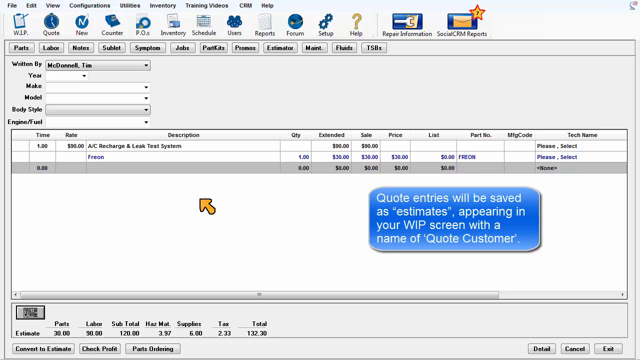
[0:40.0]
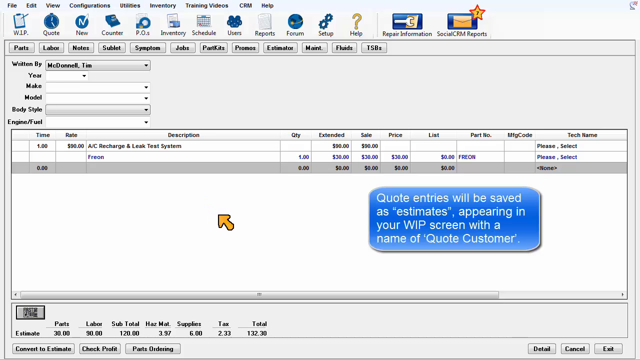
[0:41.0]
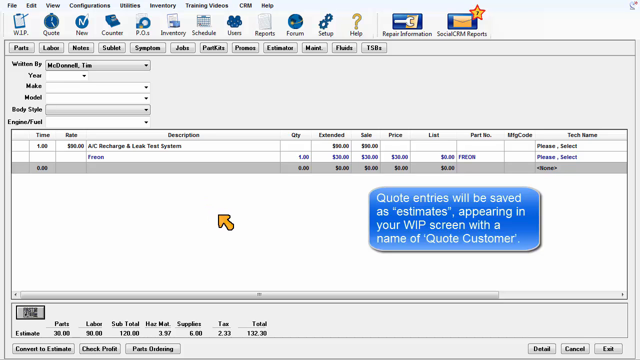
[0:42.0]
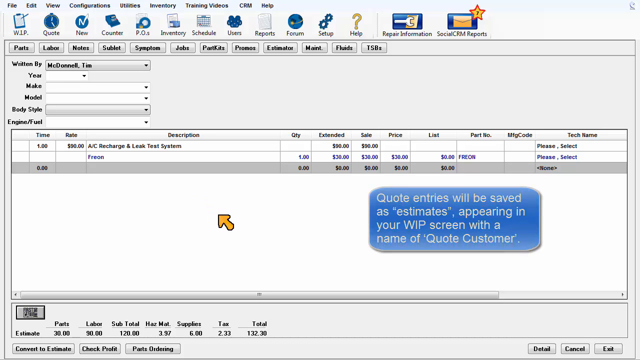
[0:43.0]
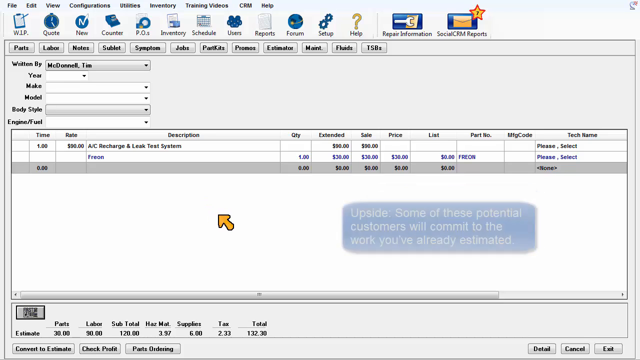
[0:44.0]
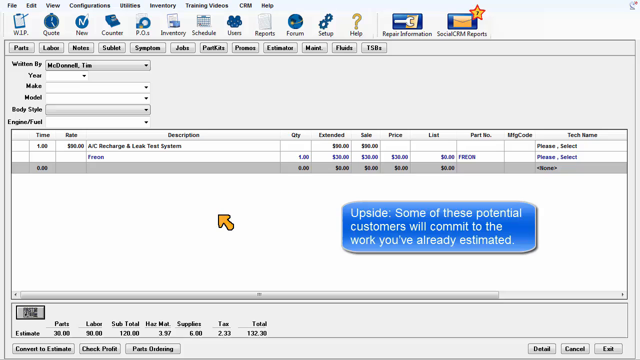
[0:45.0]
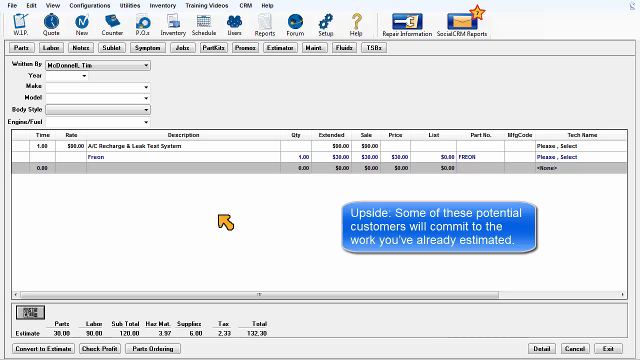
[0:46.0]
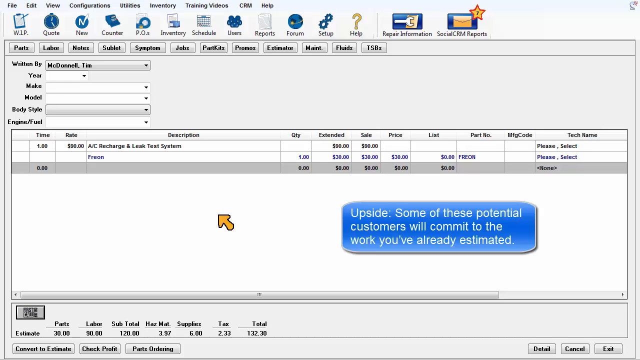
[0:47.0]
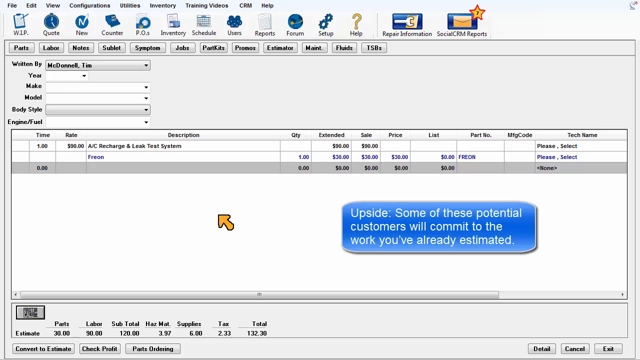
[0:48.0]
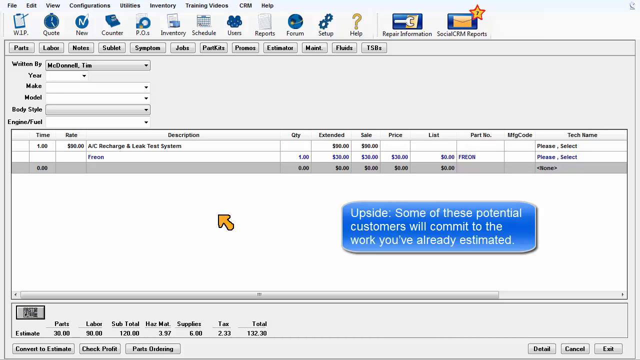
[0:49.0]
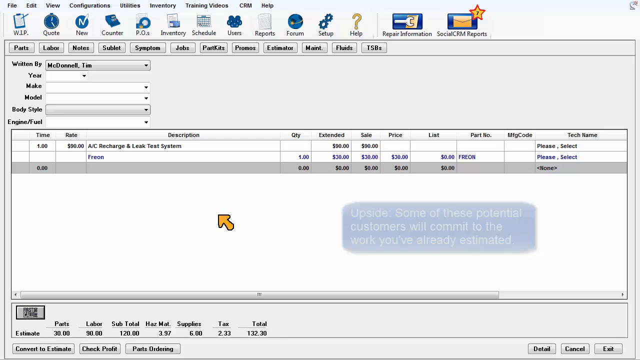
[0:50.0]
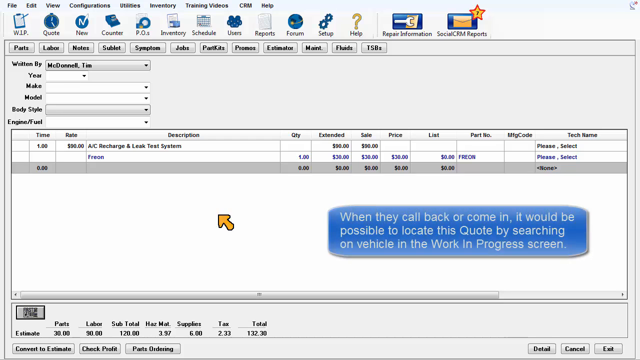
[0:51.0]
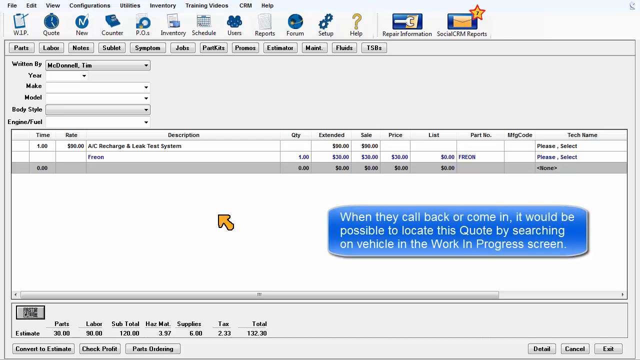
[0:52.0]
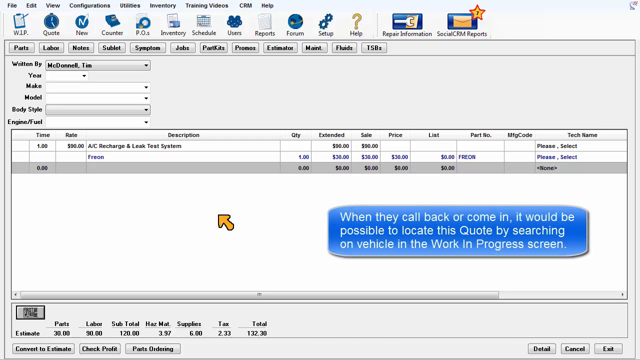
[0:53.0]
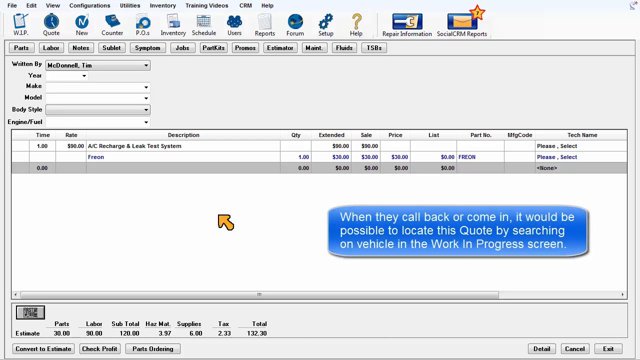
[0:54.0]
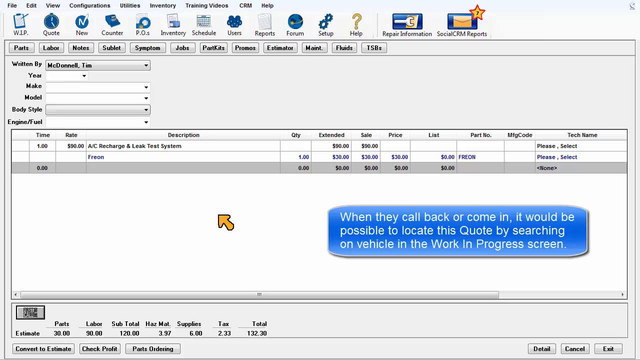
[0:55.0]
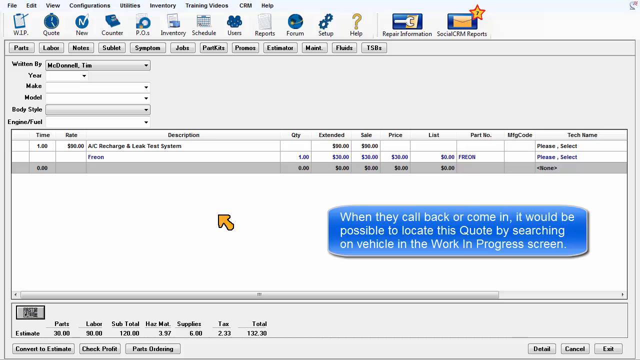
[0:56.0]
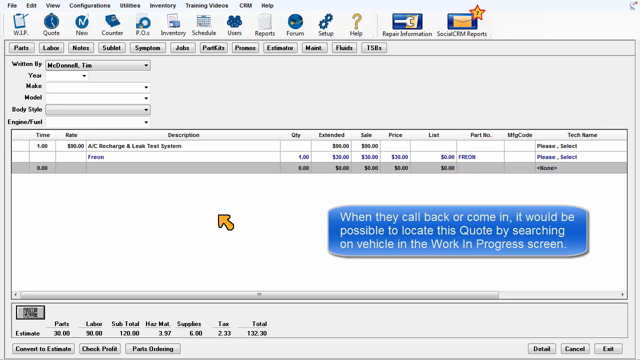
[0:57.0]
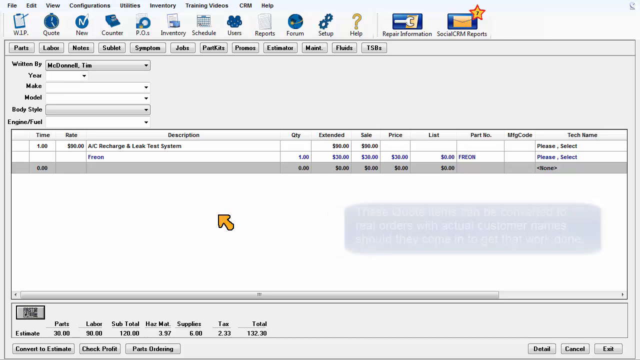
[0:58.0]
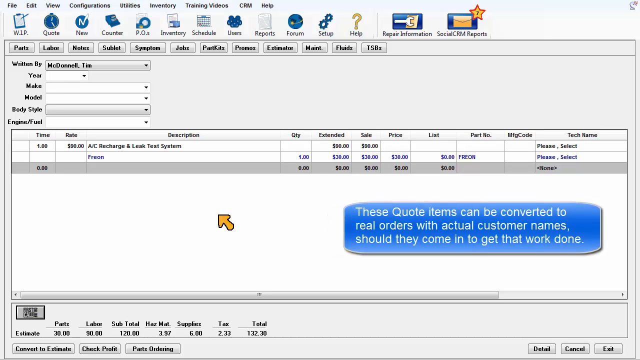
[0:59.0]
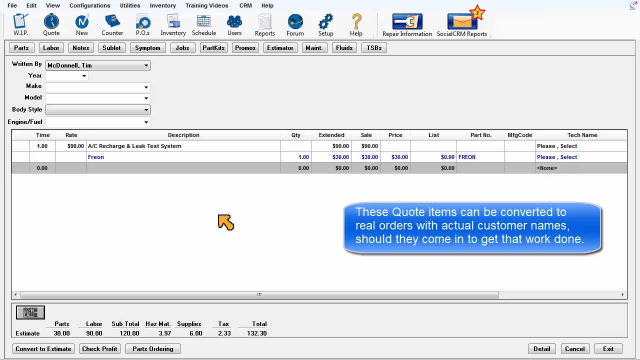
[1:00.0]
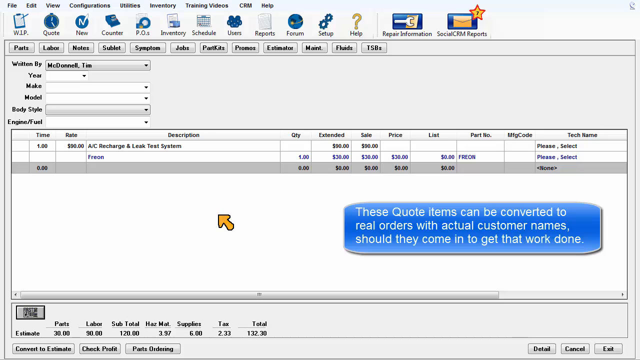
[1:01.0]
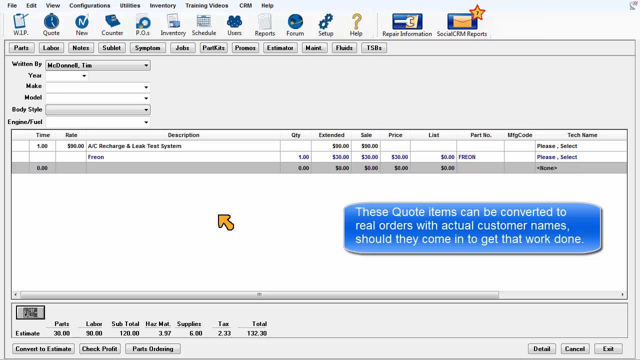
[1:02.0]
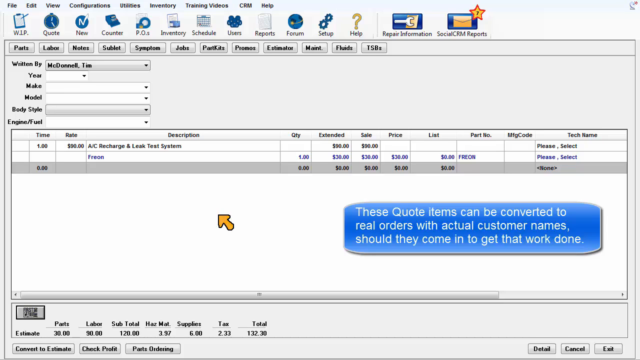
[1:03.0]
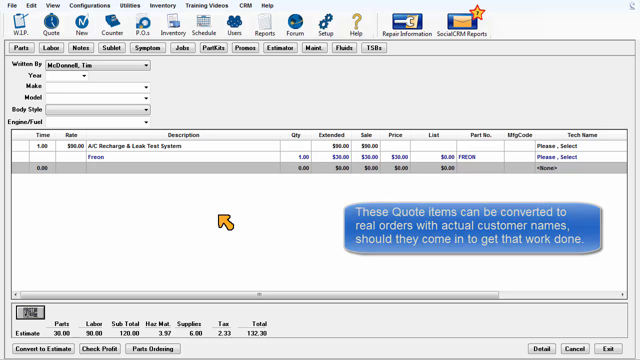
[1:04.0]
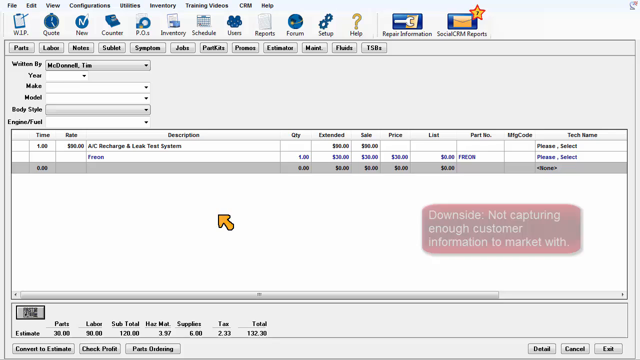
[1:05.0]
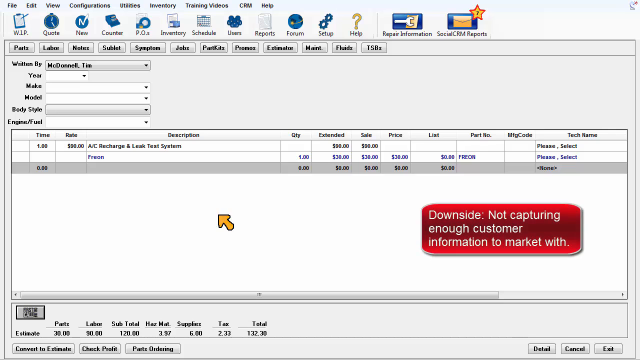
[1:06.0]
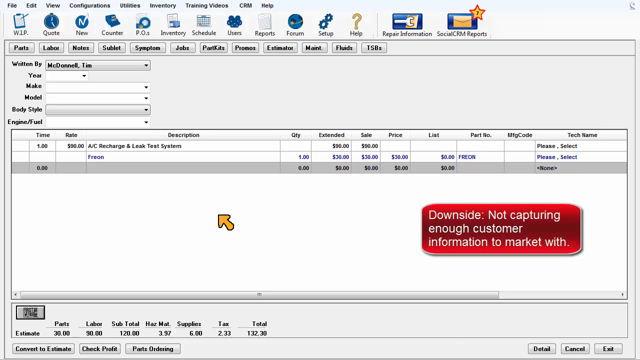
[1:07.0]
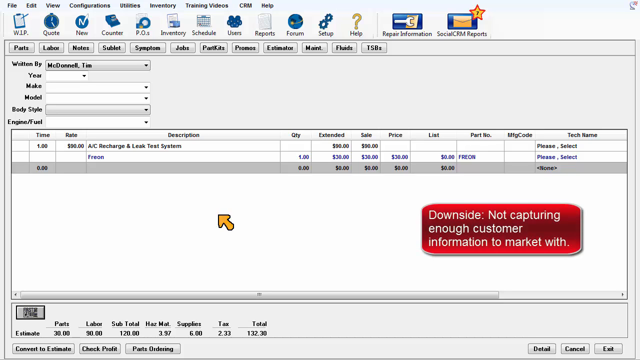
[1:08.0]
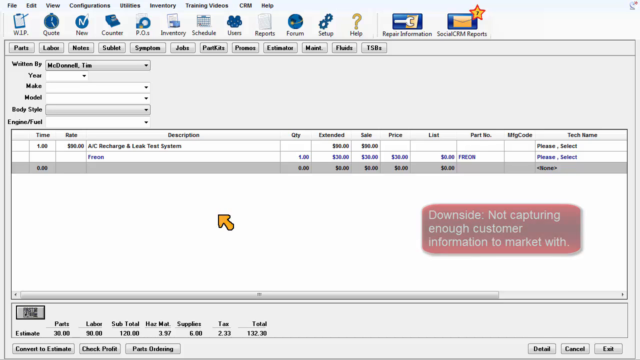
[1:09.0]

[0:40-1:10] A row of icons is visible: a notepad, a clock, the letter N, a counter, a calendar, another notepad, a globe labeled "forum," gears labeled "setup," a question mark labeled "help," a wrench labeled "repair information," and a yellow envelope with the words "social CRM reports" at the bottom. An entry shows a time of one hour, a rate of $90, and a description reading "A/C recharge and leak test system," with estimated $90 and sale $90. A bubble with a blue background then appears with text reading "quote entries will be saved as estimates appearing in your web screen with a name of quote customer." A yellow arrow moves over the software, over a blank area. Another blue bubble then appears reading "upside, some of the potential customers will commit to the work you already estimated."